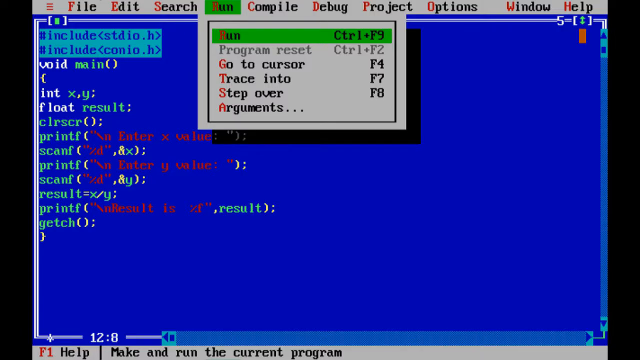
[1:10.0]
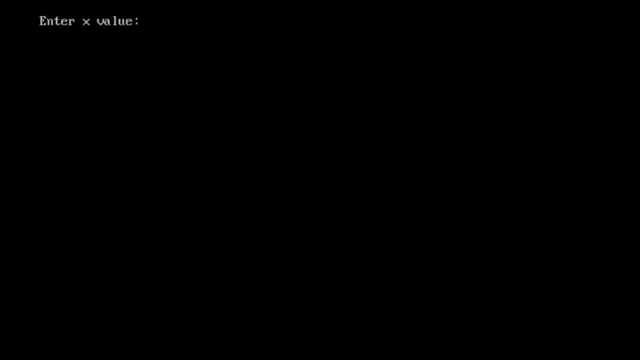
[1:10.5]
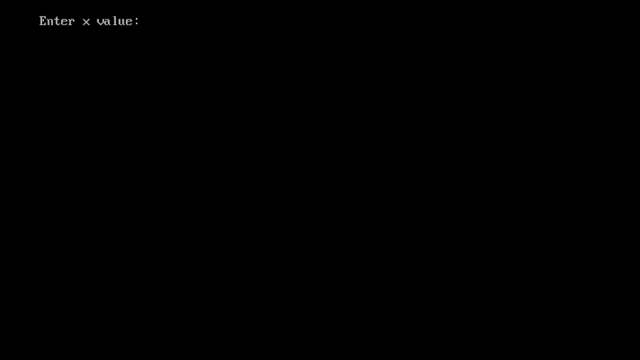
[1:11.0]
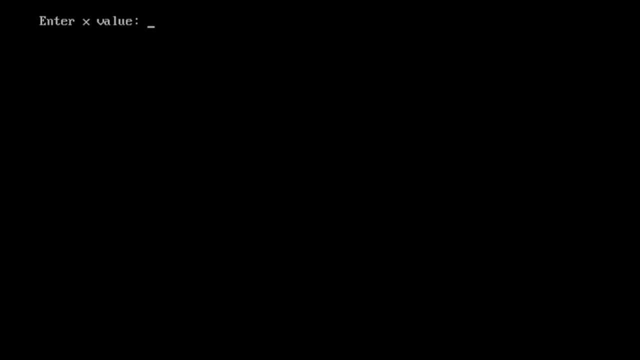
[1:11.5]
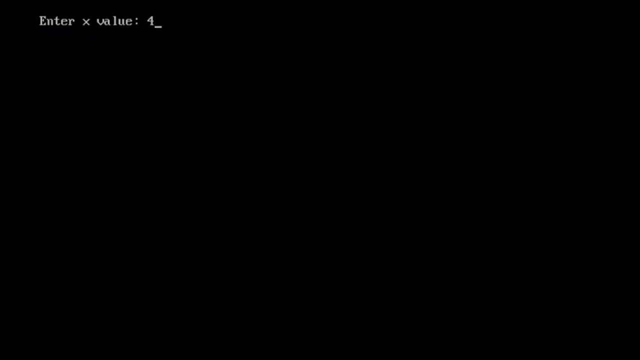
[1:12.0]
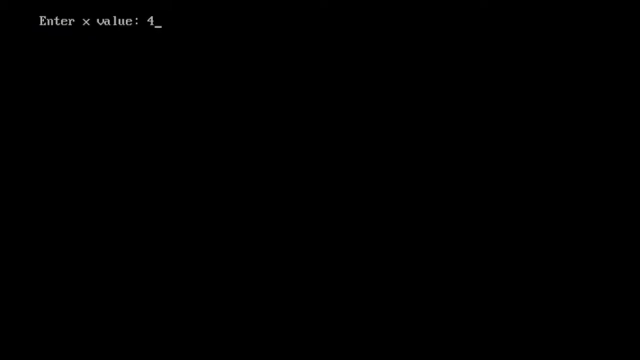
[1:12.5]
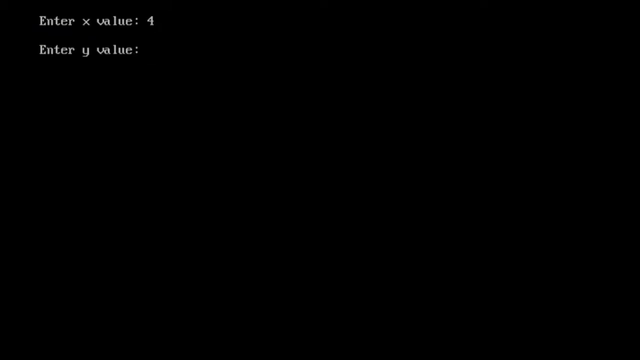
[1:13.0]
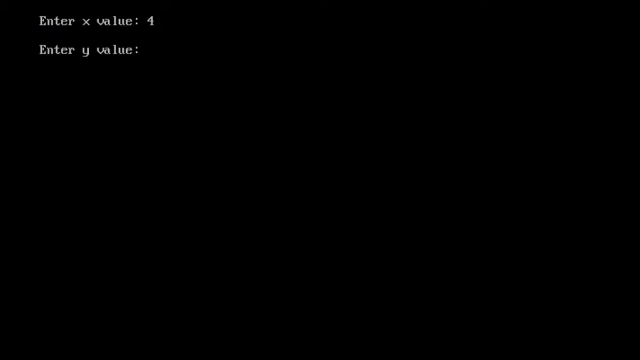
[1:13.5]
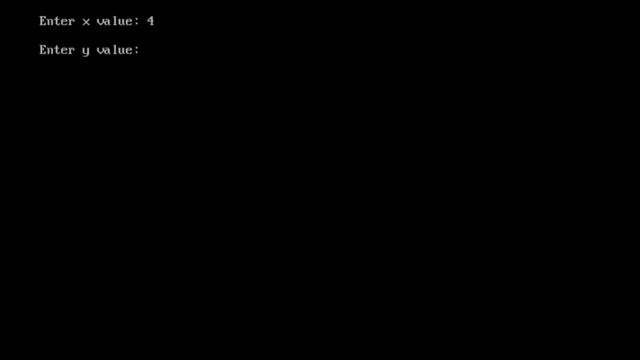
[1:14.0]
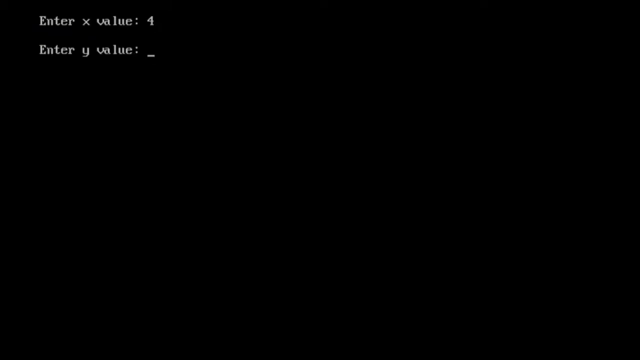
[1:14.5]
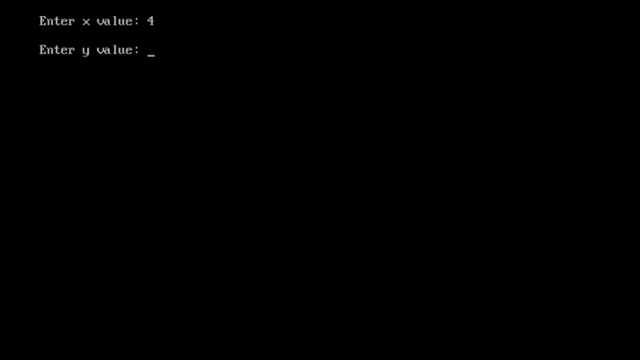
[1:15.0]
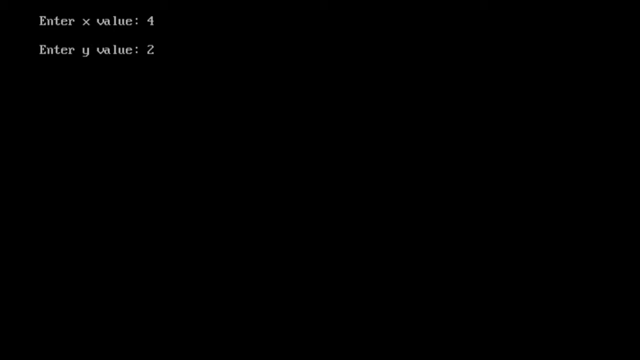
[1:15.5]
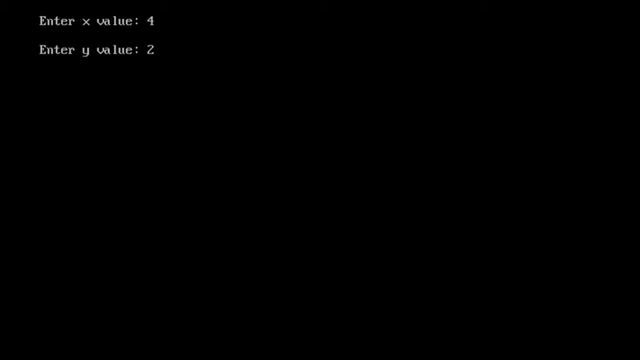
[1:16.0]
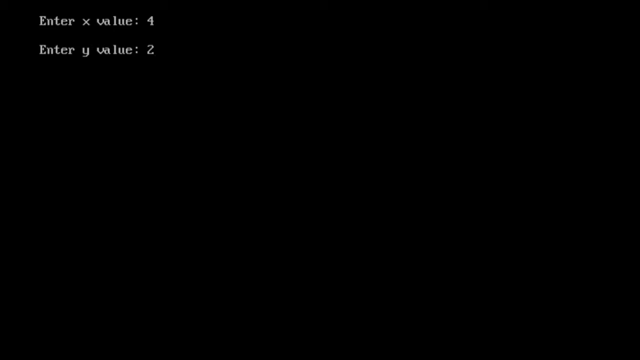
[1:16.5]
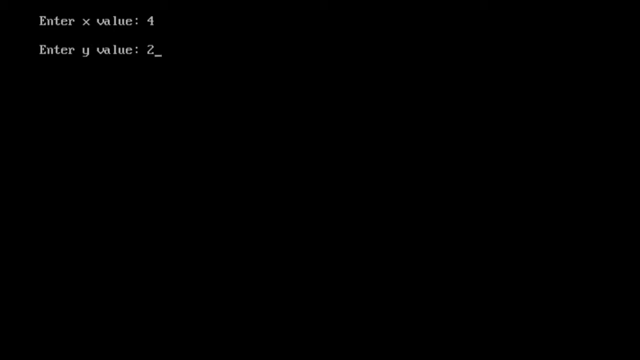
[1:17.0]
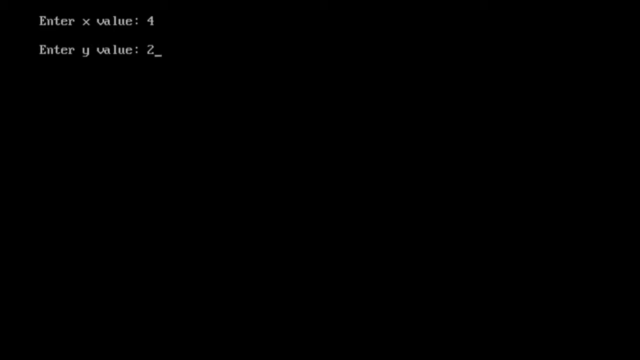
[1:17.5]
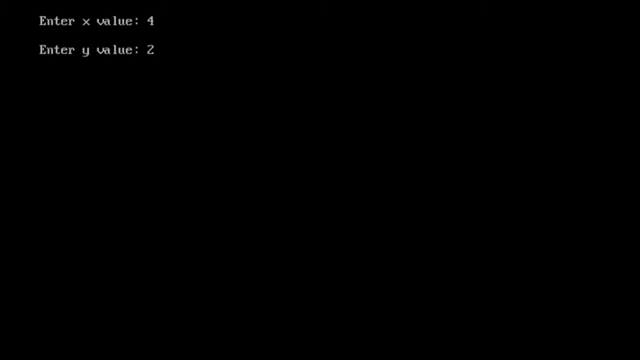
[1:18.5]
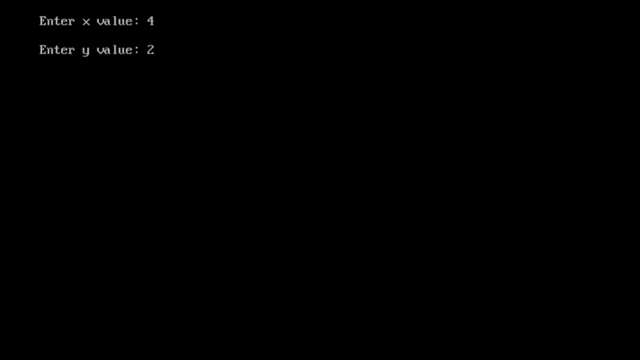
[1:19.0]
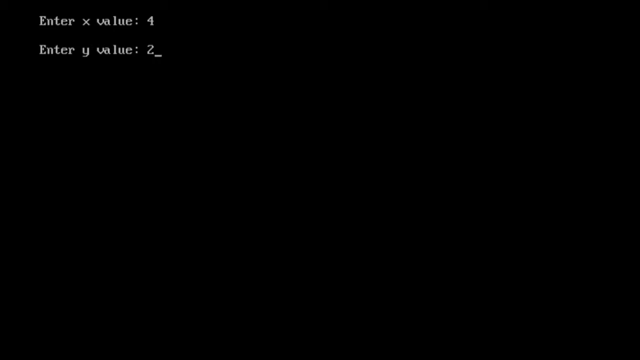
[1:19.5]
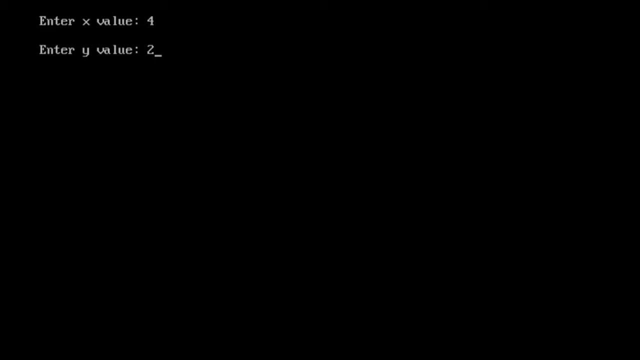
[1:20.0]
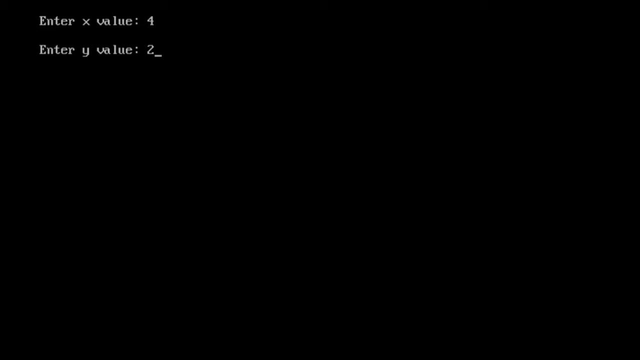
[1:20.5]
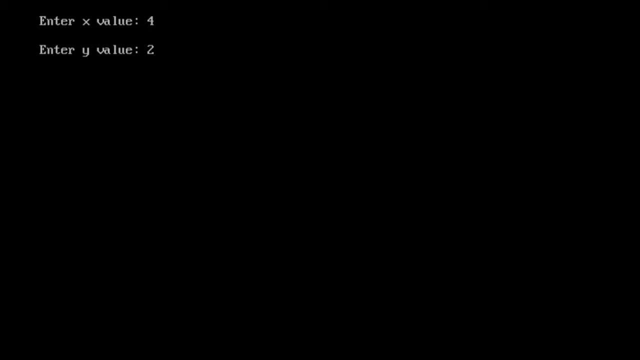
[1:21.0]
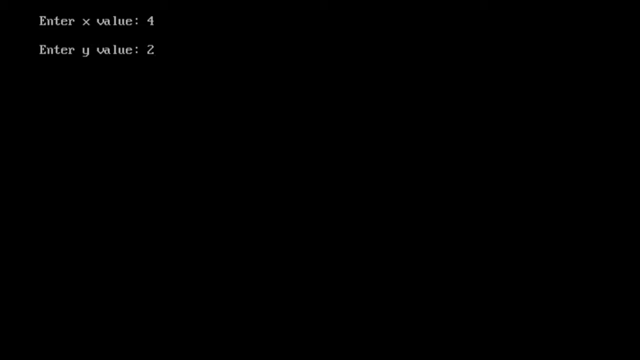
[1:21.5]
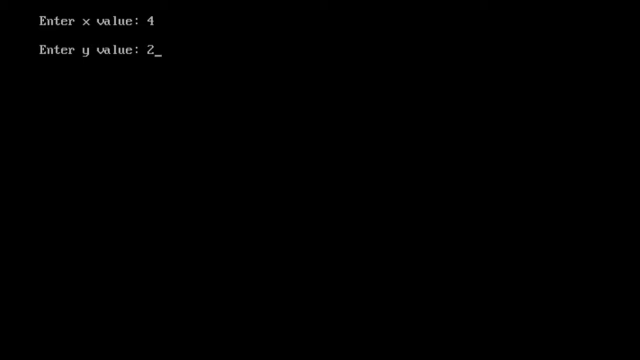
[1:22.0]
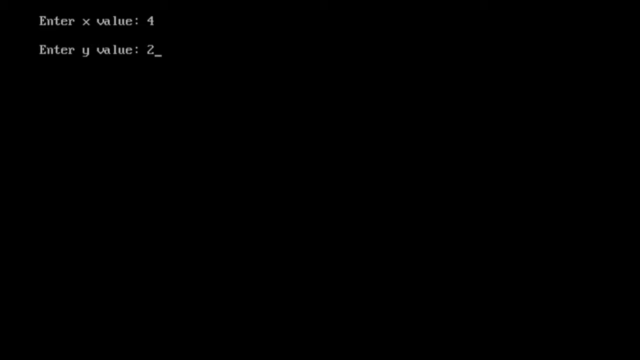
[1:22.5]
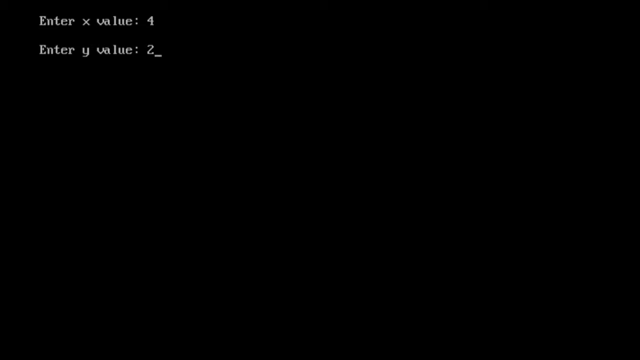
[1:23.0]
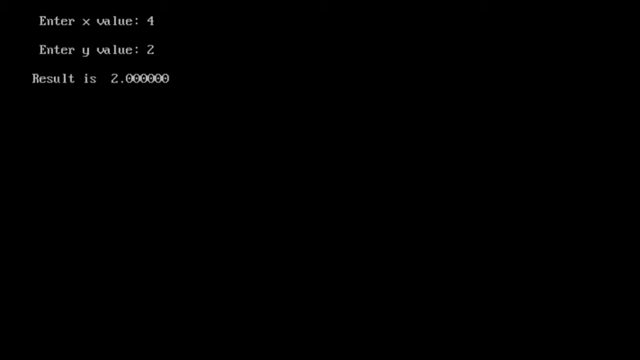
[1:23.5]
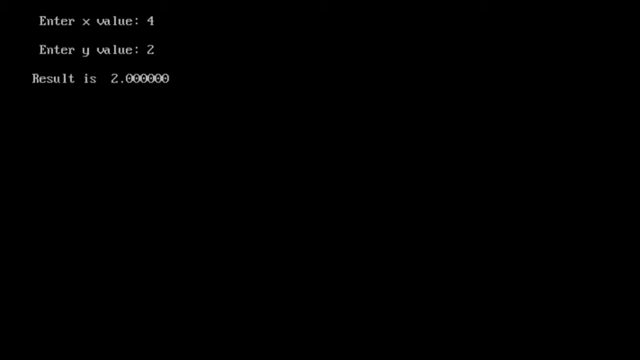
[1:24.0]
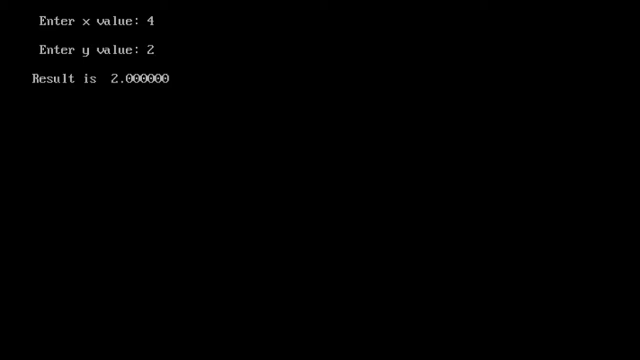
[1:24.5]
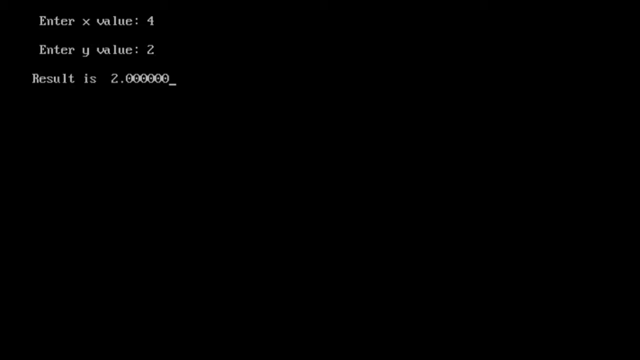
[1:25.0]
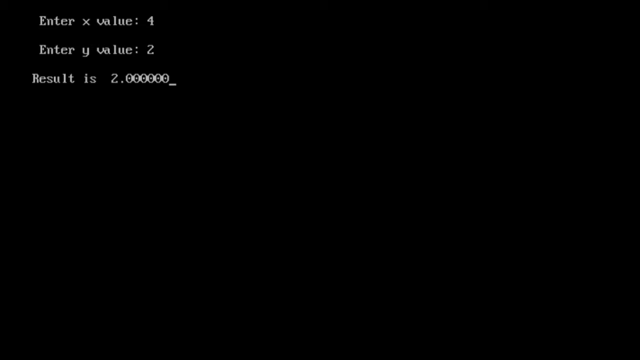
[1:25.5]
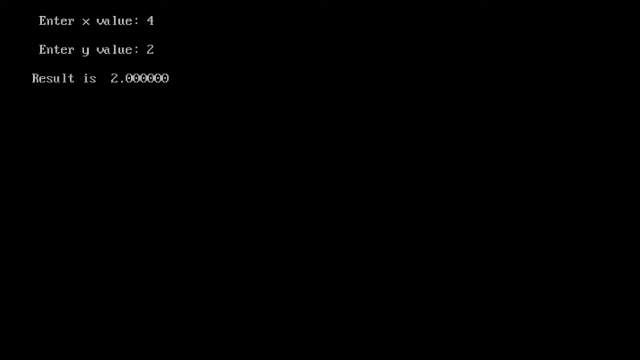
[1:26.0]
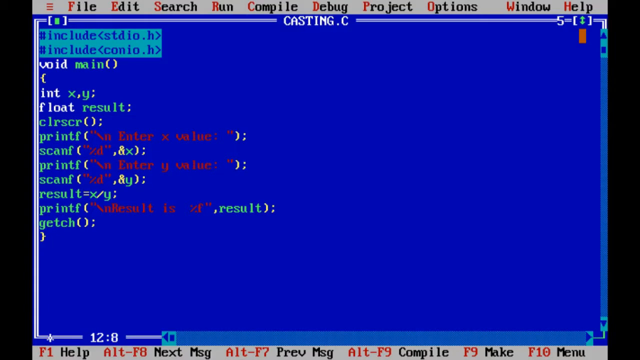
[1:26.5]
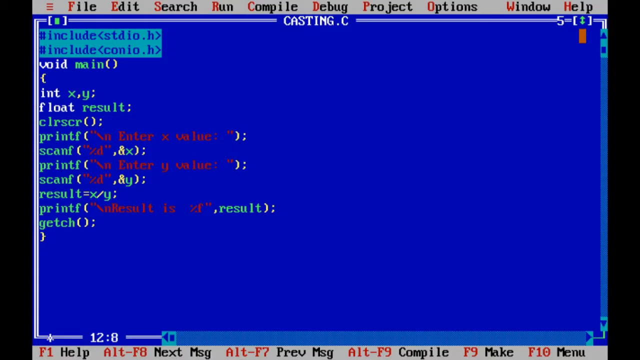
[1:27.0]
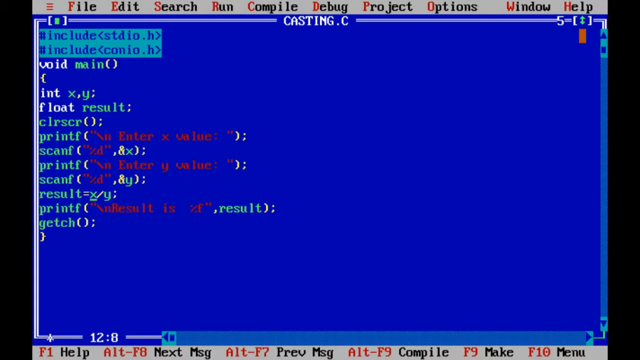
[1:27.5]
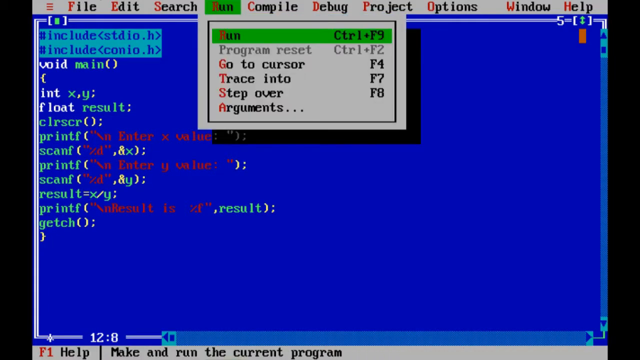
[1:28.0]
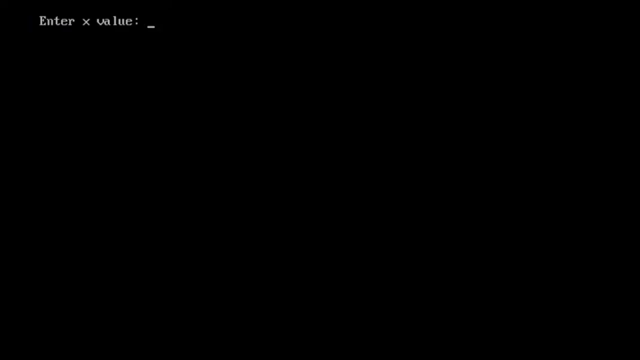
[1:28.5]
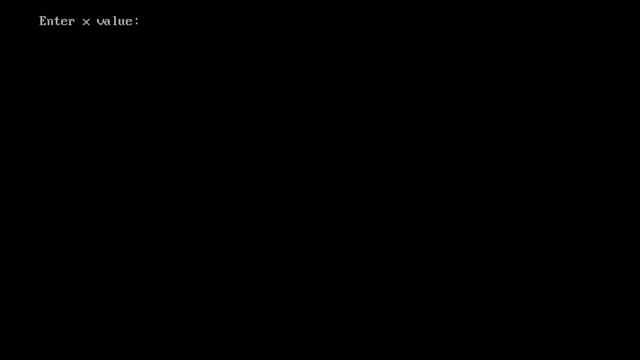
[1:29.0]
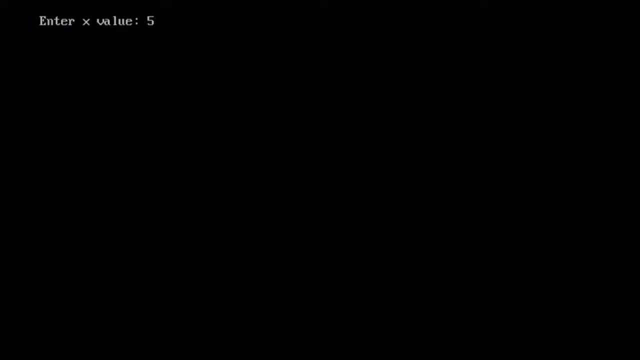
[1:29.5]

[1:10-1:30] An open IDE with a blue background and about 13 lines of code is shown very briefly, for about a second, before the screen transitions to a solid black background. In the top left corner, white text appears reading "enter x value:". A cursor flickers to the right of it and the integer 4 appears. A new line appears below reading "enter y value:", an underline cursor appears to its right, and the integer 2 appears. The screen holds for a few seconds before a new line appears underneath reading "result is 2.000000". This screen holds, then disappears, and the view returns to the blue IDE screen, where the user has gone to the header menu and selected the fourth option, run. A dropdown below it has six options: Run, Program Reset, Go to Cursor, Trace Into, Step Over and Arguments, with the top option, Run, highlighted in green.